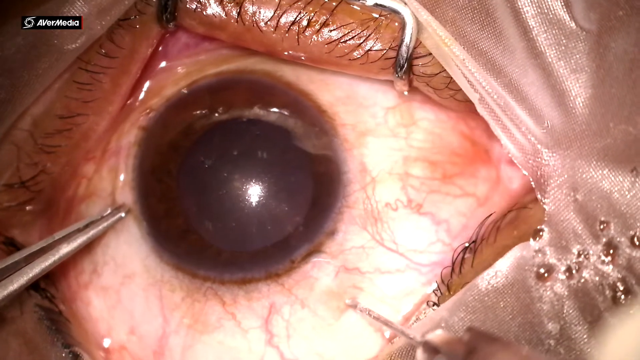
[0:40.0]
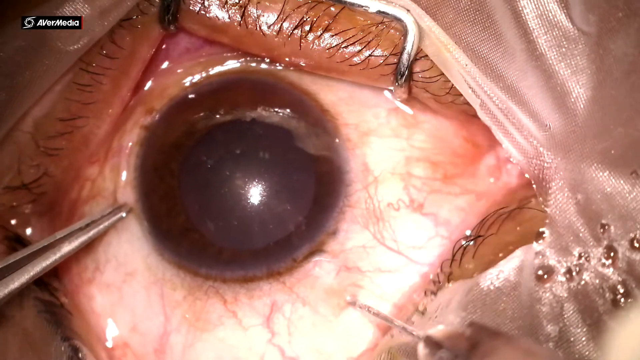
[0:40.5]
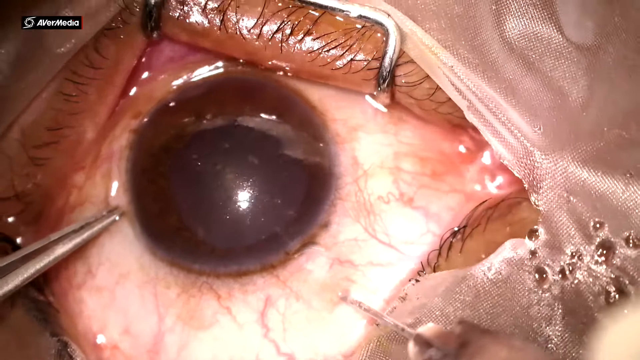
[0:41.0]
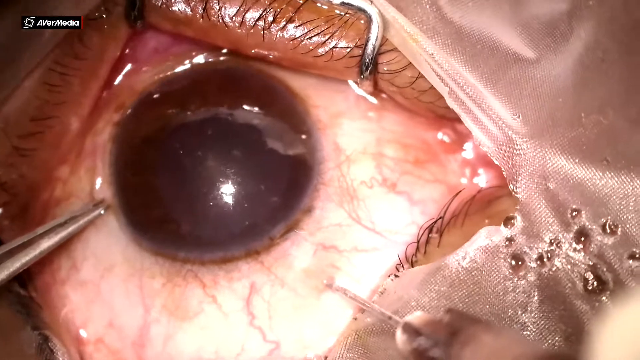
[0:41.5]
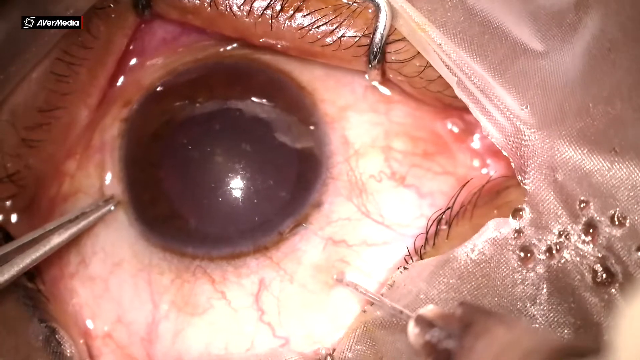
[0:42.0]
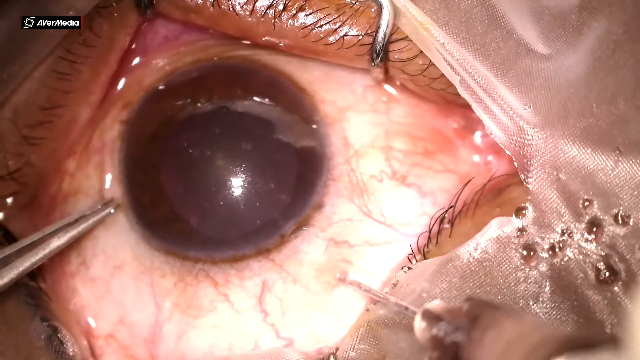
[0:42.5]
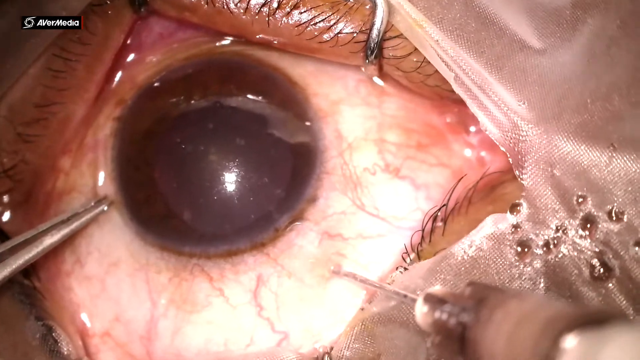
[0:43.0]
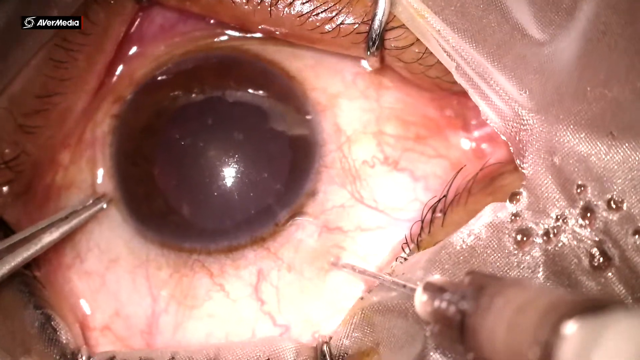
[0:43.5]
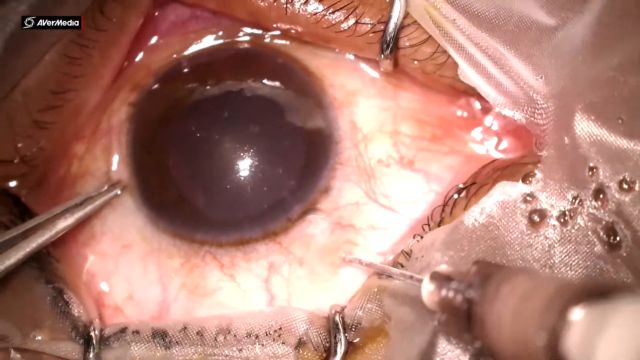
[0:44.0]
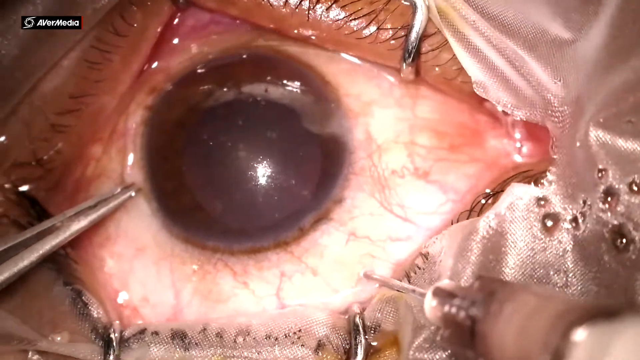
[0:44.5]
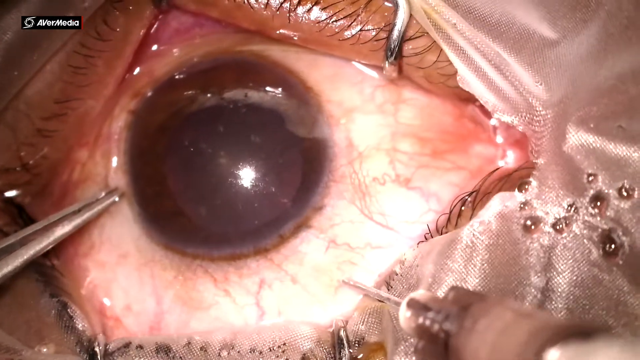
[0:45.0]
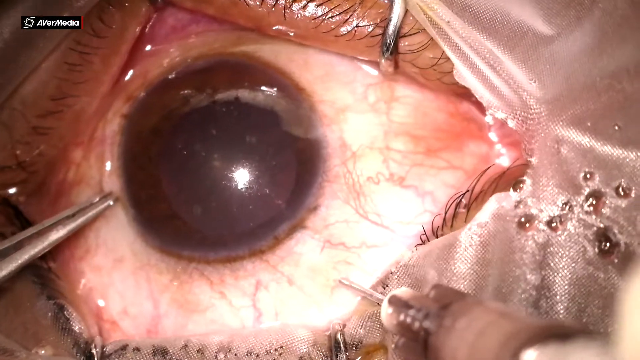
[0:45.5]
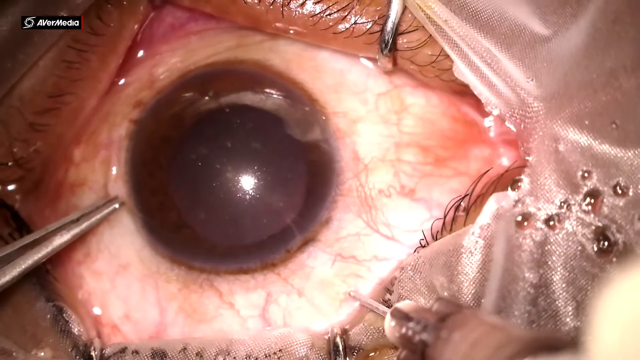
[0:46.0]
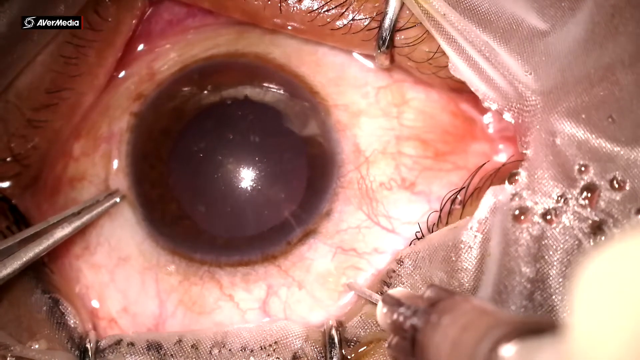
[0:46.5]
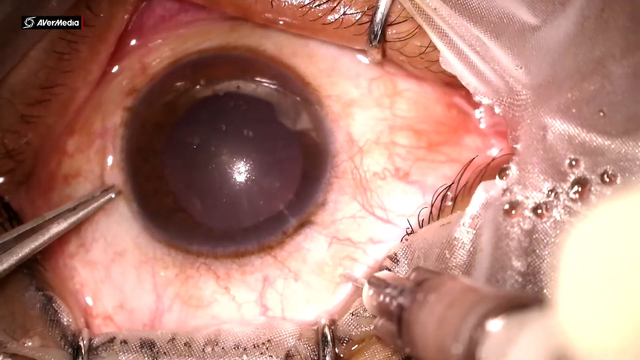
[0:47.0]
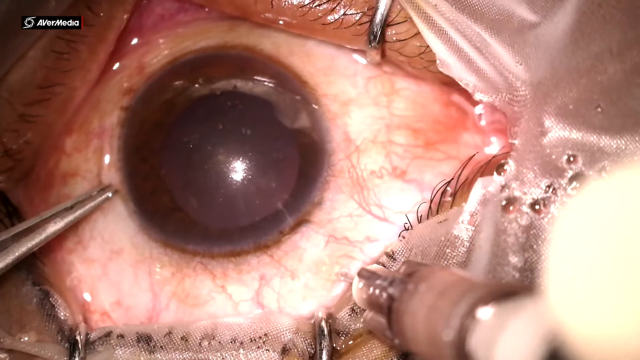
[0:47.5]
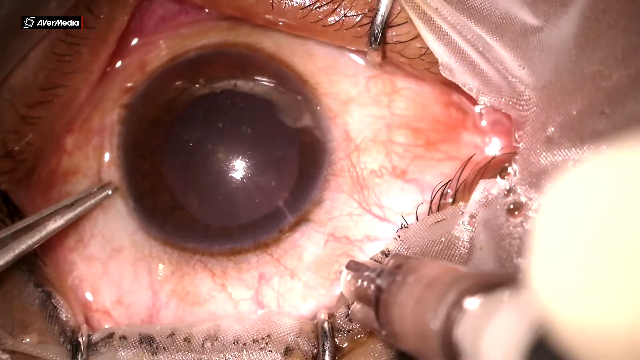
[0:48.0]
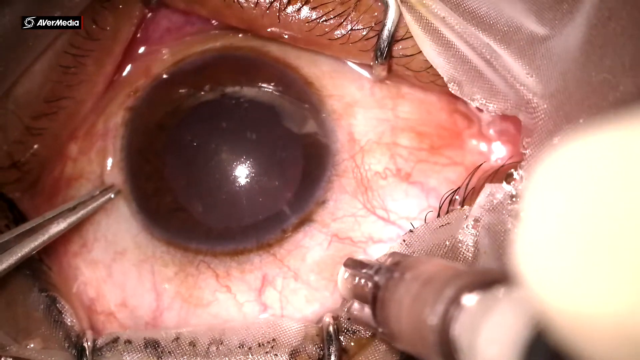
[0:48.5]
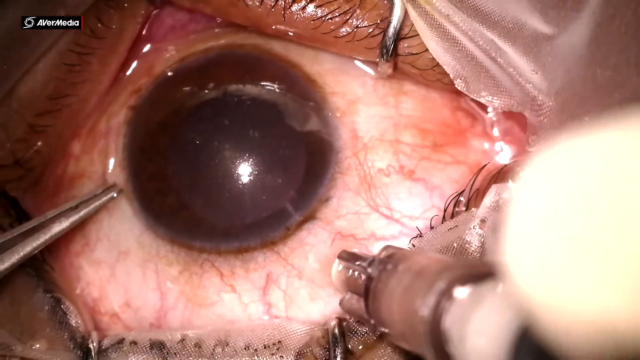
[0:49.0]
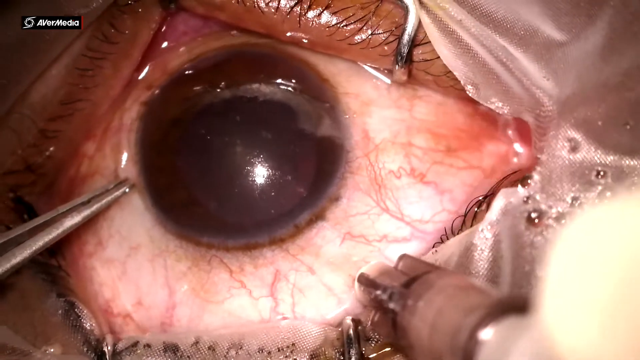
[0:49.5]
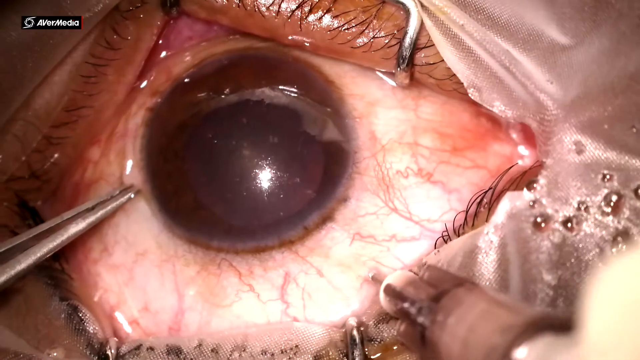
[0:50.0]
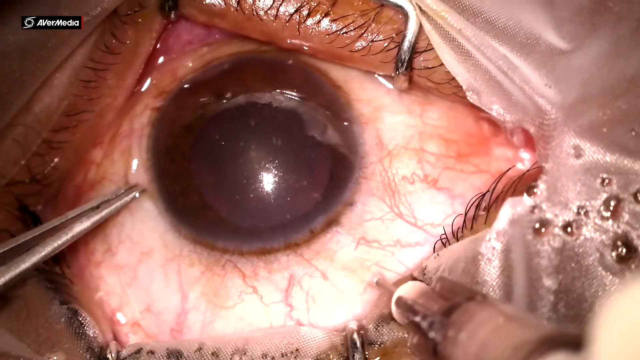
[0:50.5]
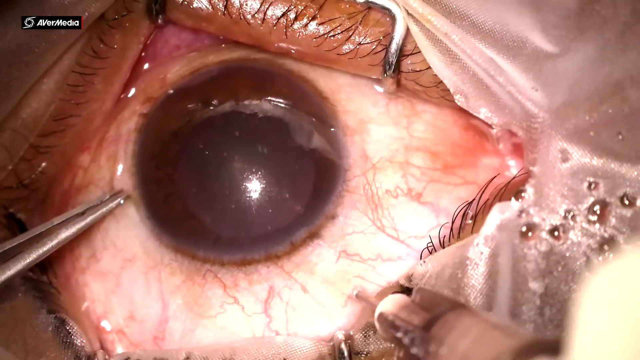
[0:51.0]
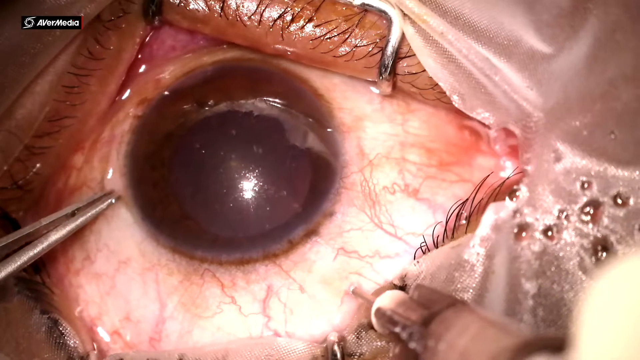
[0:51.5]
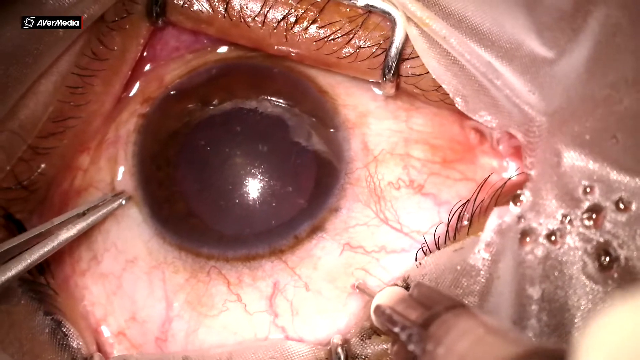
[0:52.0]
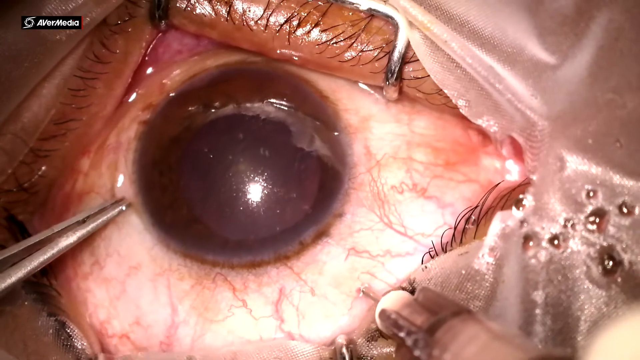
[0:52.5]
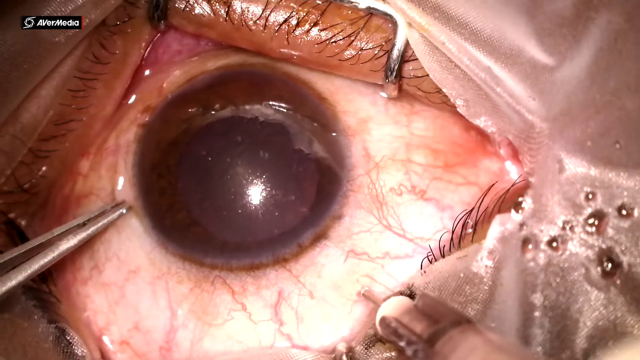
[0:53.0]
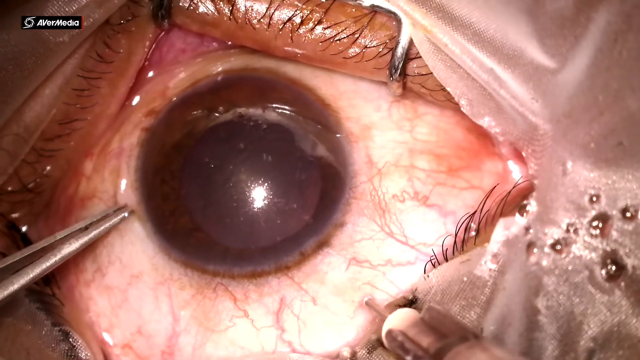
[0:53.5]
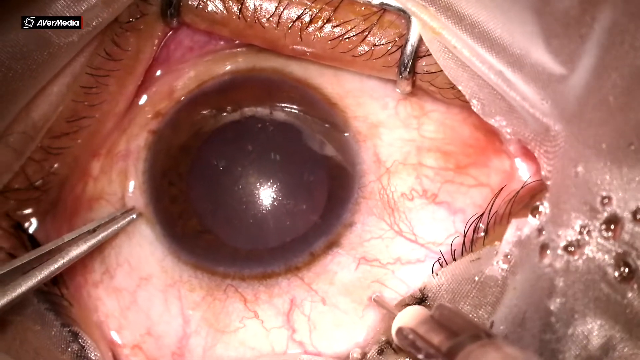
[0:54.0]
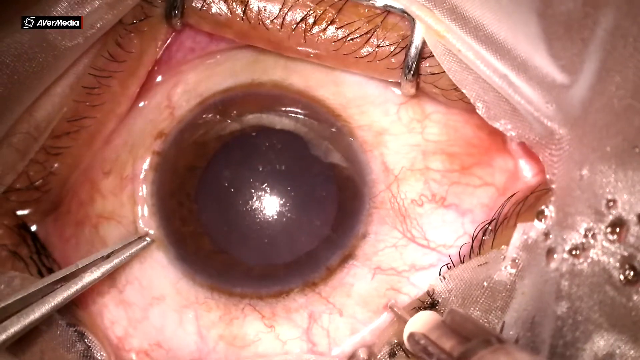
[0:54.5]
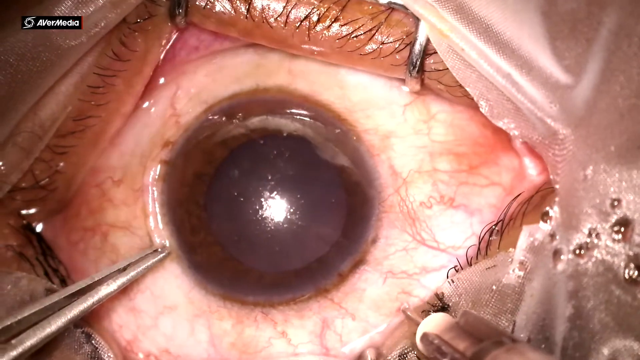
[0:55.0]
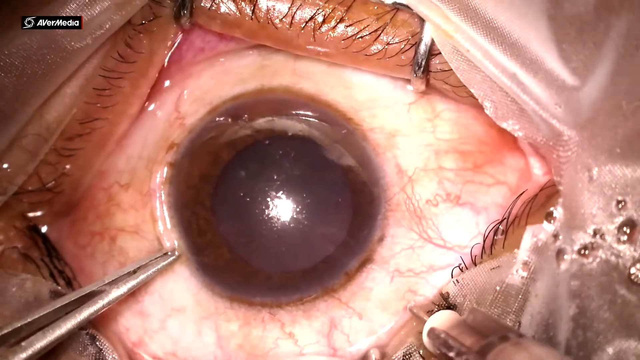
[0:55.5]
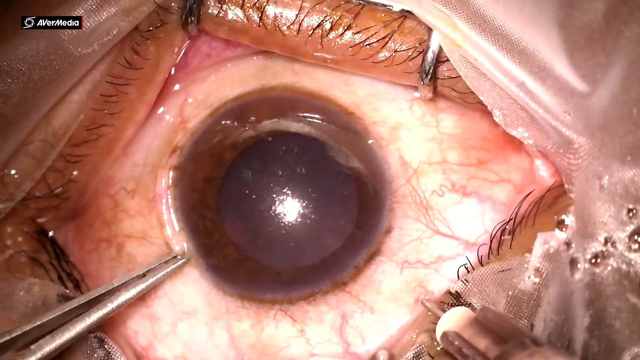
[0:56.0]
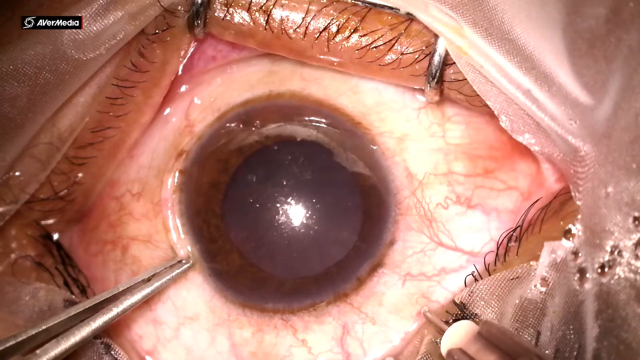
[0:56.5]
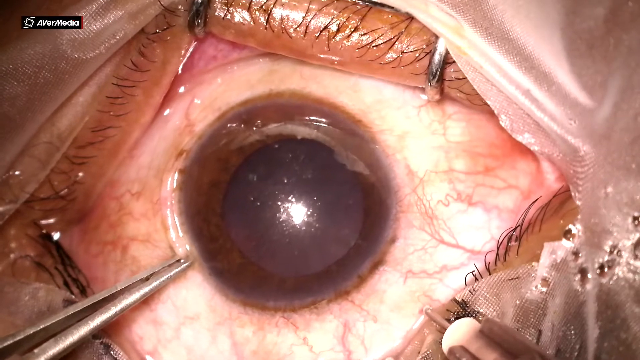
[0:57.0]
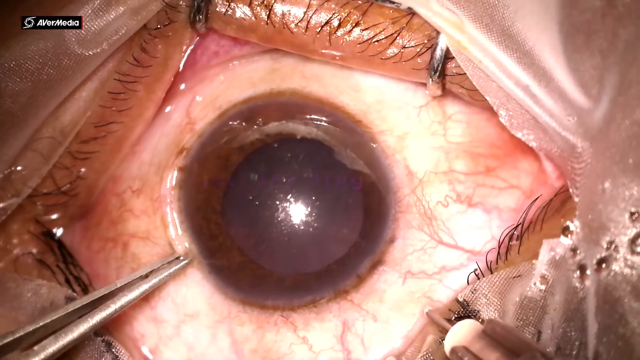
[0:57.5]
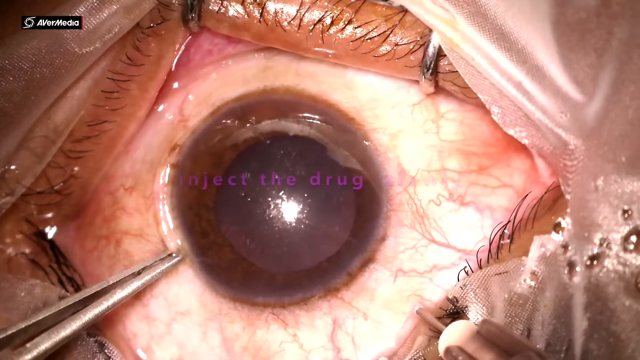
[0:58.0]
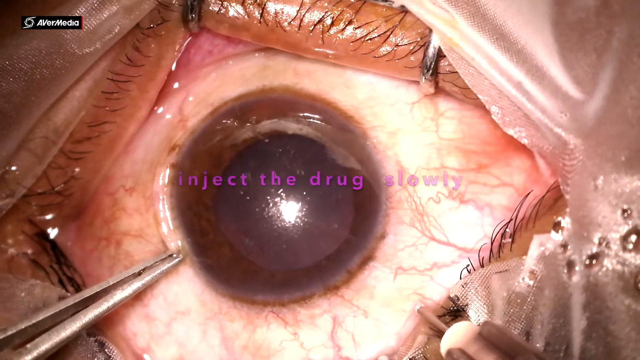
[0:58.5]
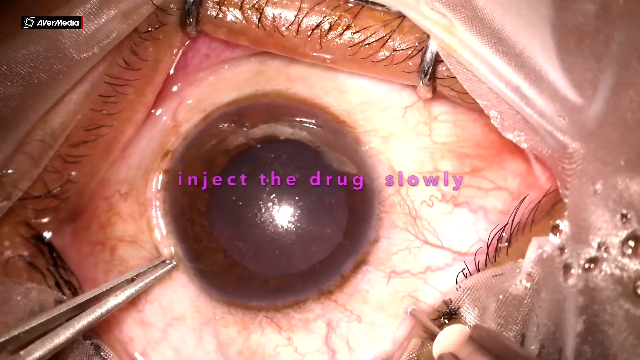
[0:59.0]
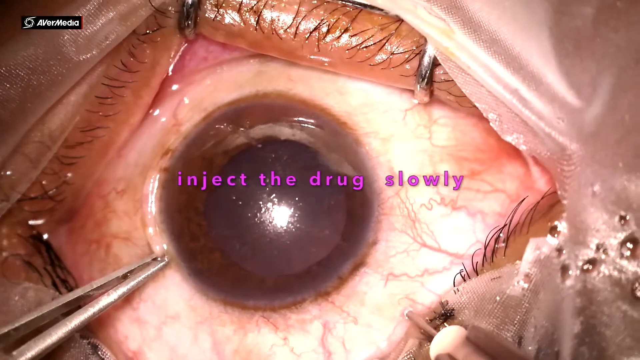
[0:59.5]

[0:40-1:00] The operation on the eyeball continues, with the eye still held very wide open. A needle has been injected inside the eyeball. Purple text in the middle of the screen reads "inject the drug slowly". Metal prongs hold the eye open in almost a hexagon shape, so wide that it cannot be shut at all. The eyeball seems to move, so the person may be awake, though this is unclear.